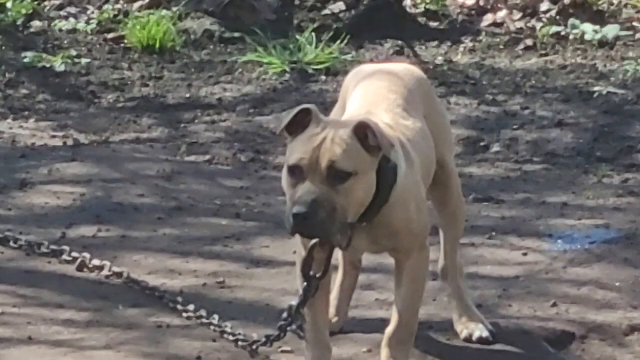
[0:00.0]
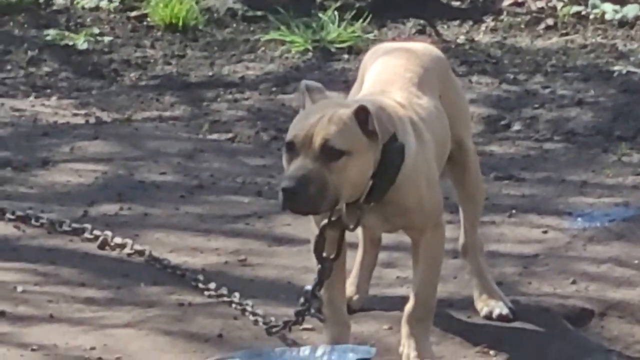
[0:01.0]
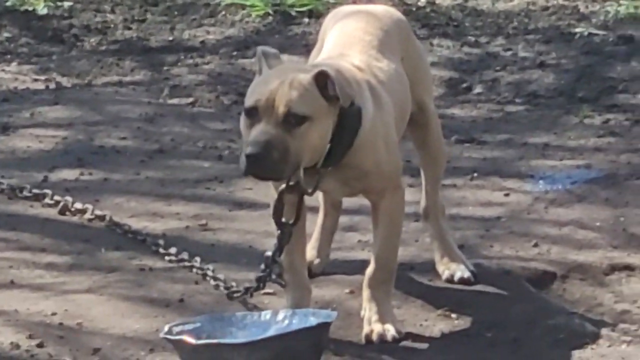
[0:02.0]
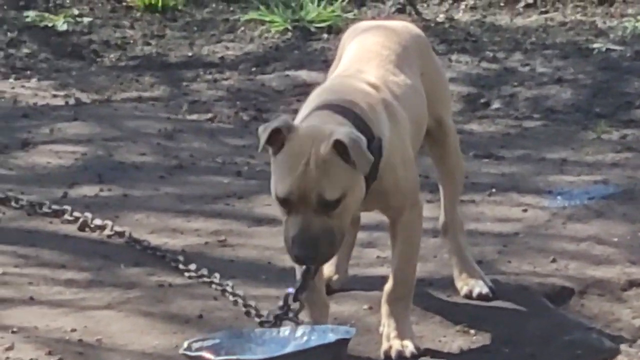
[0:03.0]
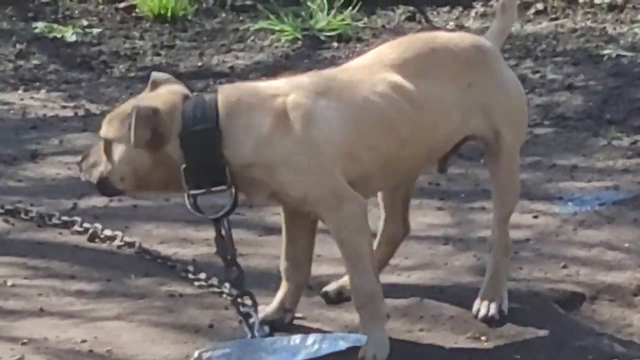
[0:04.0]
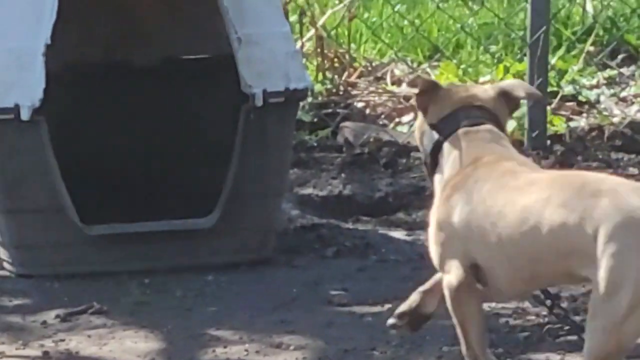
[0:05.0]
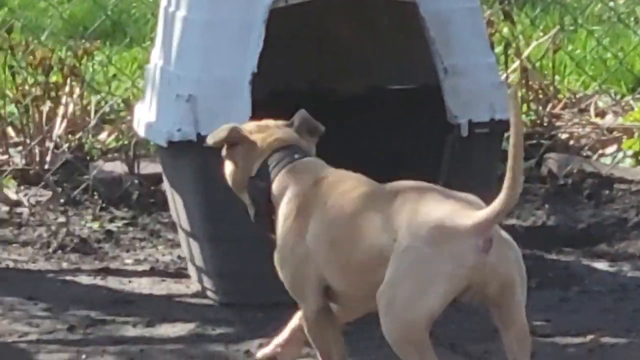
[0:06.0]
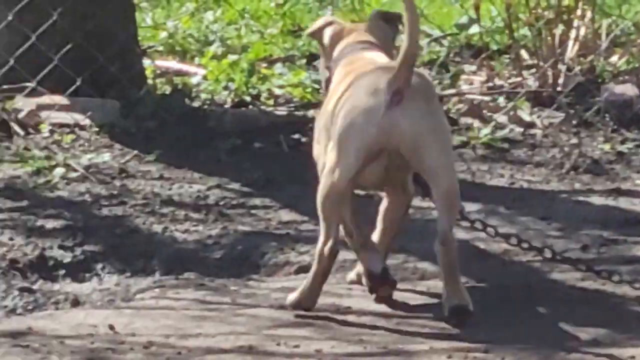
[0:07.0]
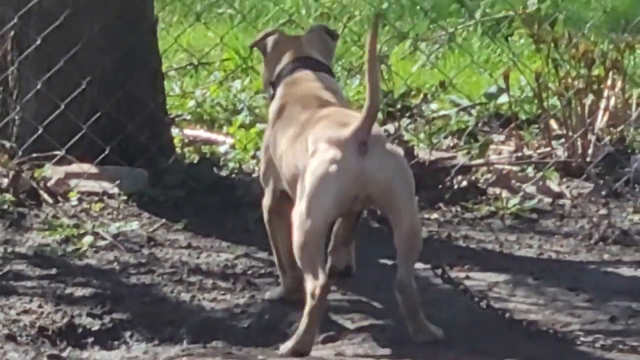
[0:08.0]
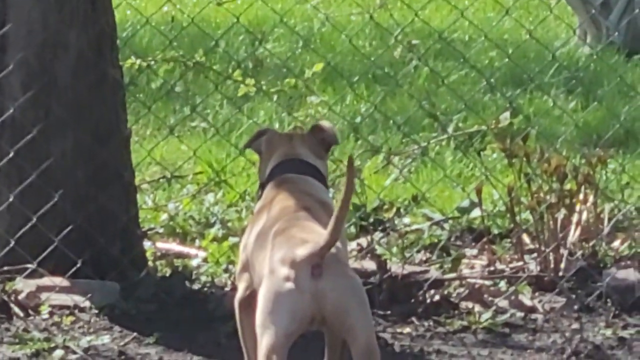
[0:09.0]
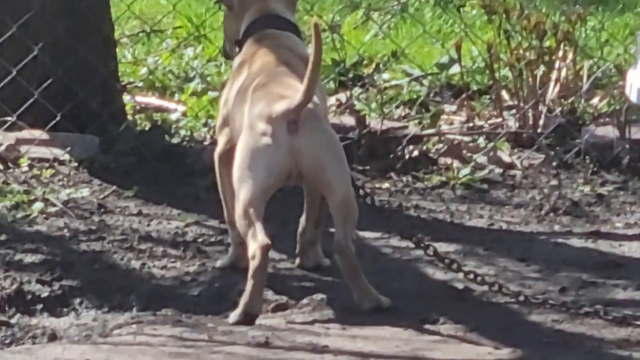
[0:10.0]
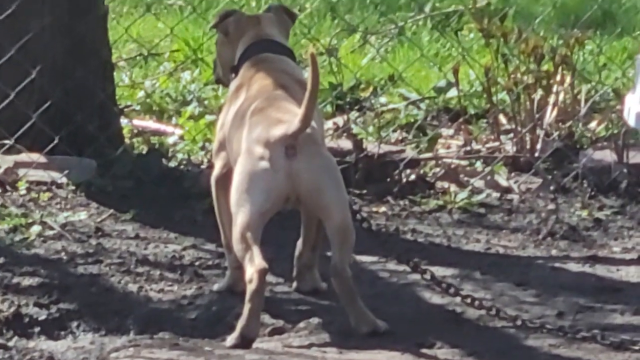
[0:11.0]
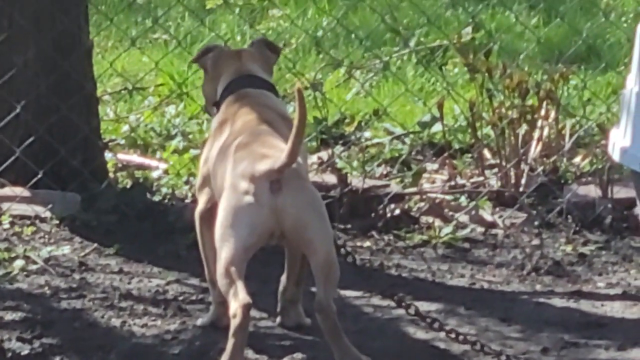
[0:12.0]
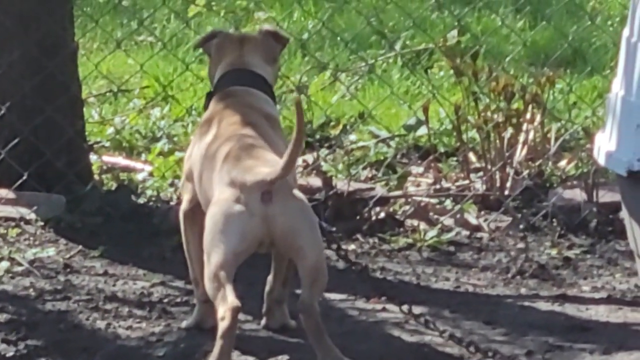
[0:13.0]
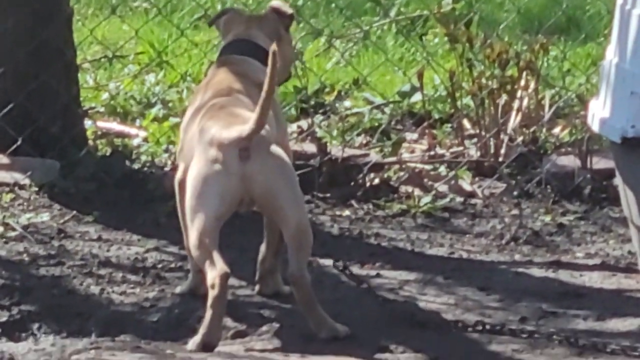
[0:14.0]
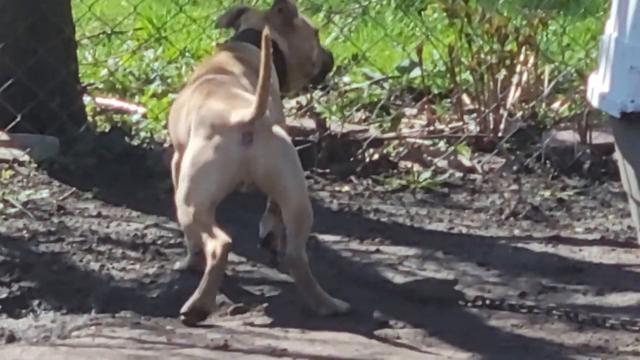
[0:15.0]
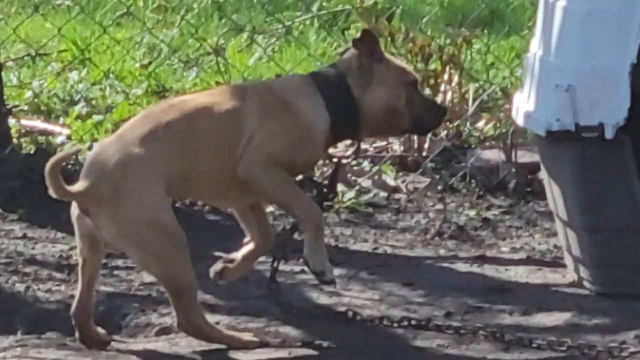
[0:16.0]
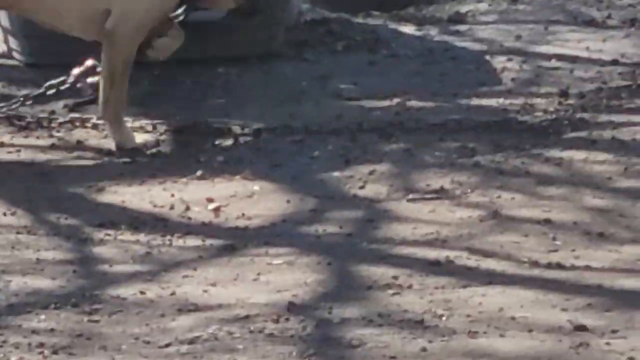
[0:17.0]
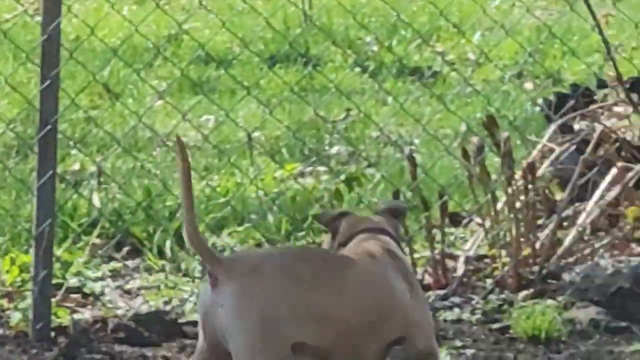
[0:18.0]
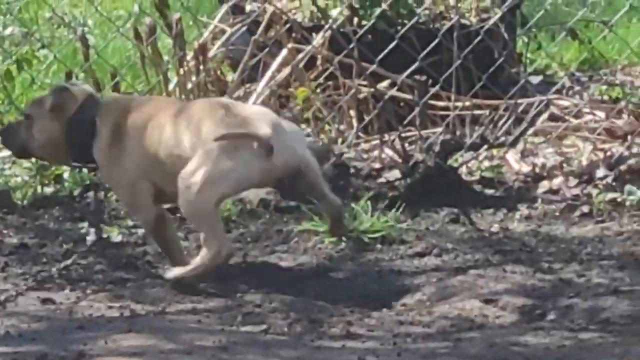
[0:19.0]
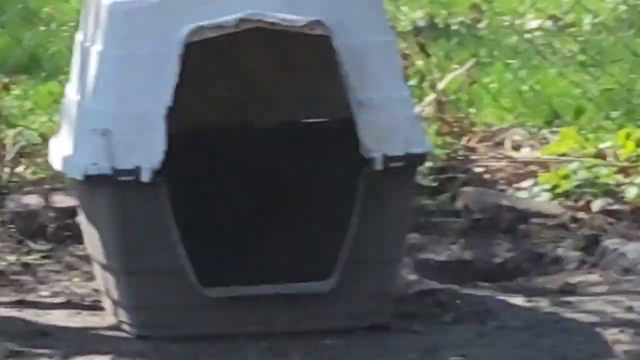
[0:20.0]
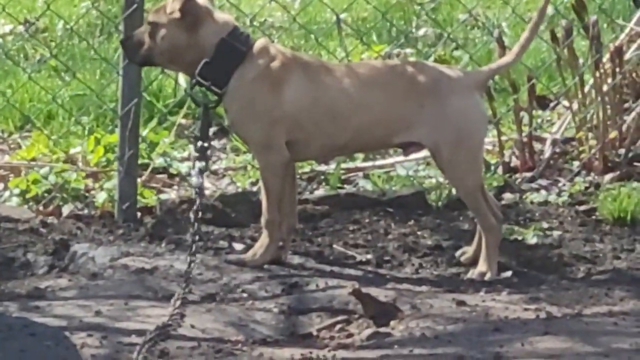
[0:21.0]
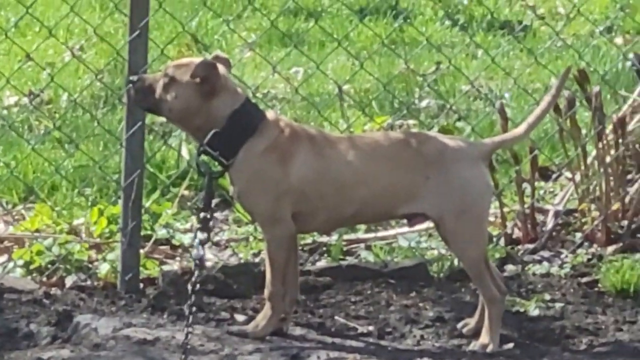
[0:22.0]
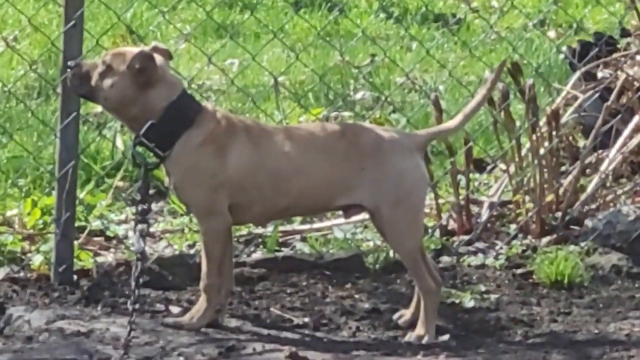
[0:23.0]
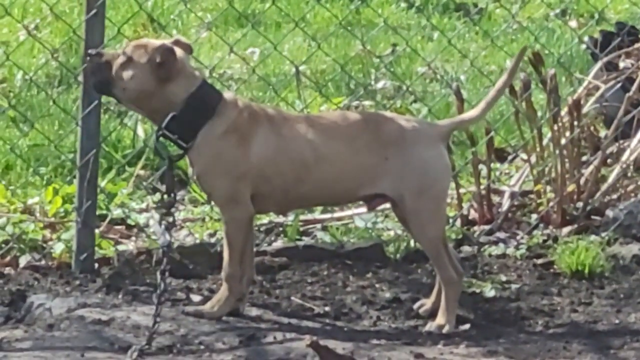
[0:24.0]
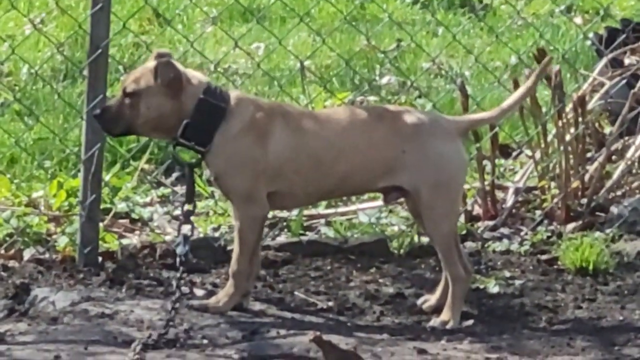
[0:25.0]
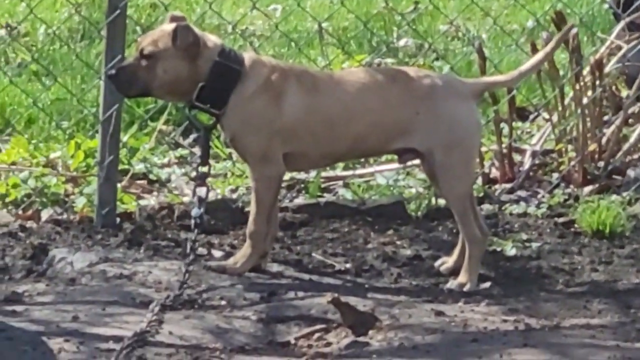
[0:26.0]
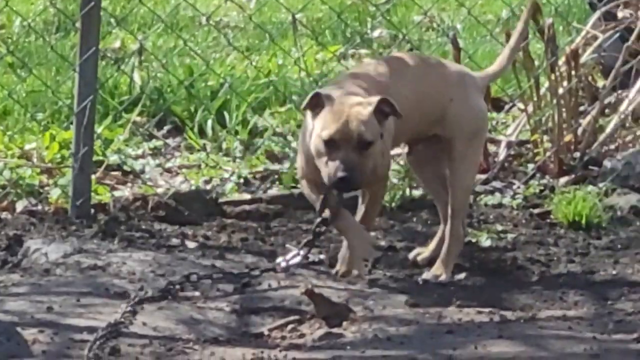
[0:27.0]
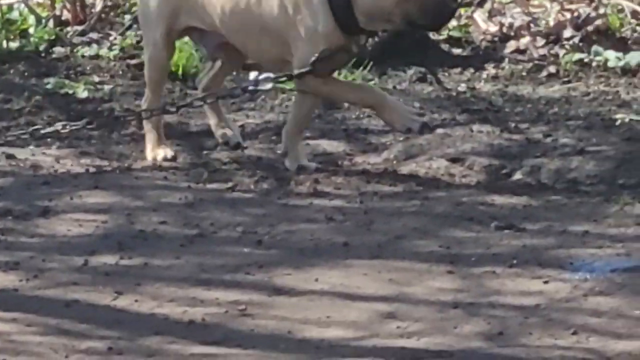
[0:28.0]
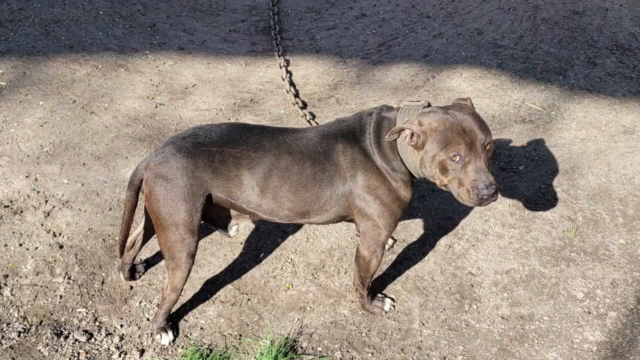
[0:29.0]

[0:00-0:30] A brown dog is chained to something and looks like it is in a confined space. There is a barricade, and a belt is on the dog's neck, through which a chain is attached. In front of the dog is a place that is probably used to keep food for it. The dog walks around within its restricted space, runs toward the corner and barks. It runs toward the place where it can stay, looks up and barks again. No one outside seems to be there to help it.